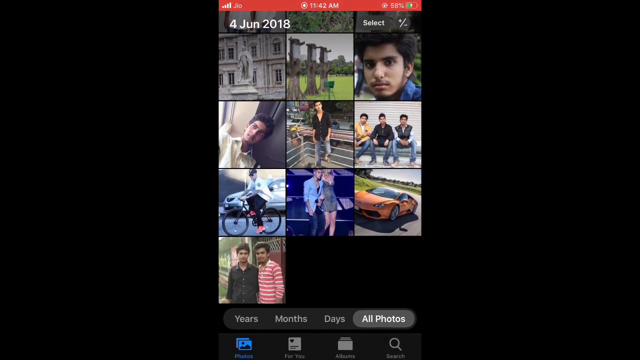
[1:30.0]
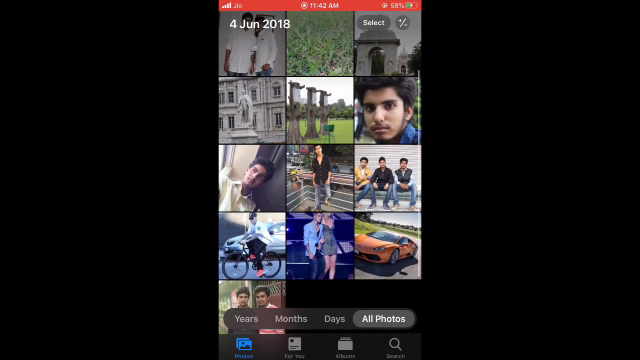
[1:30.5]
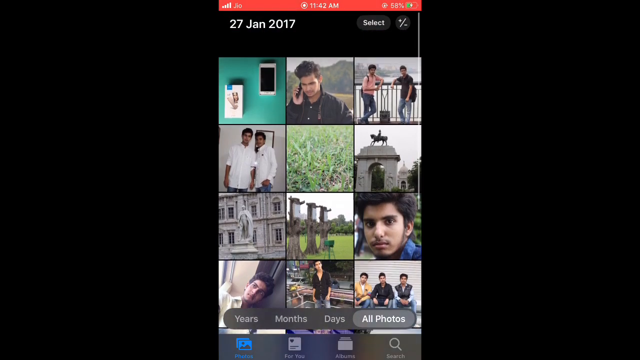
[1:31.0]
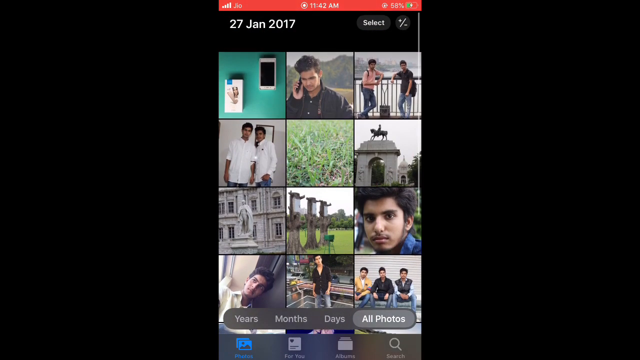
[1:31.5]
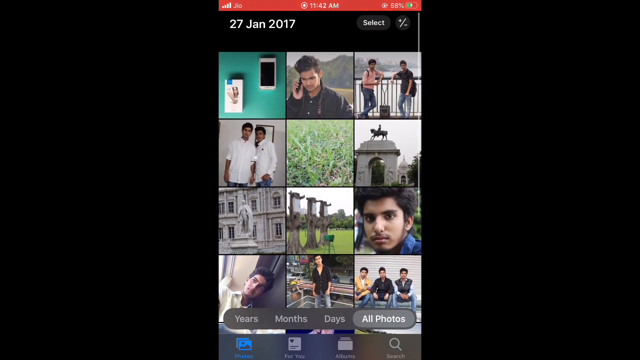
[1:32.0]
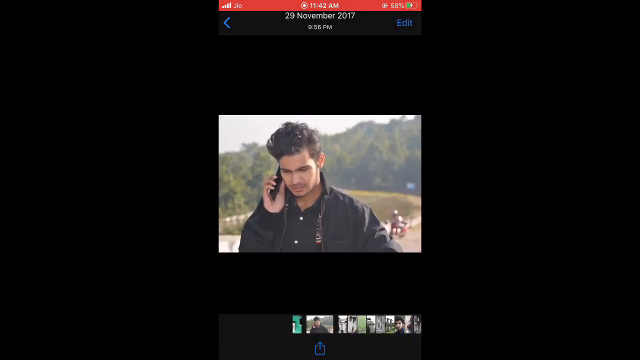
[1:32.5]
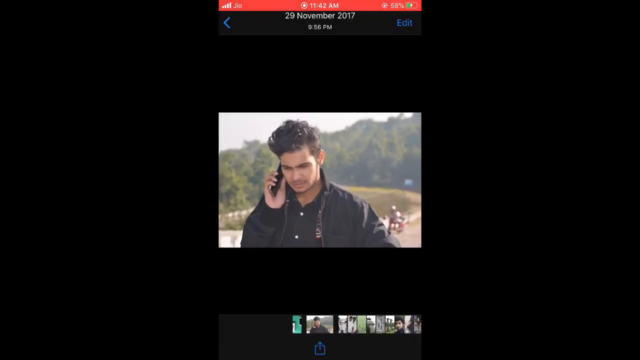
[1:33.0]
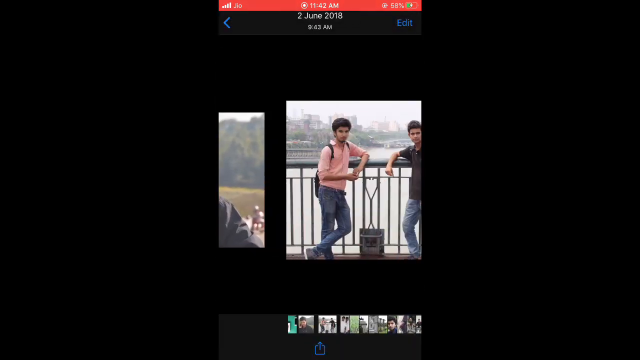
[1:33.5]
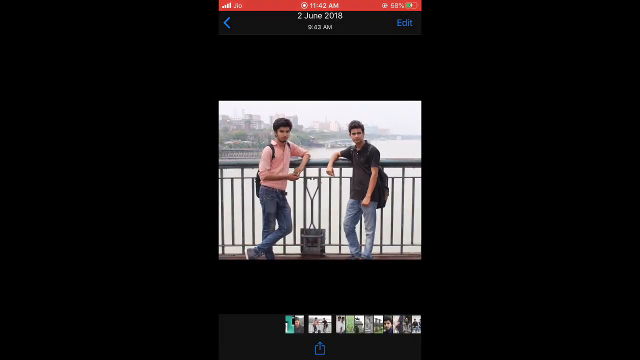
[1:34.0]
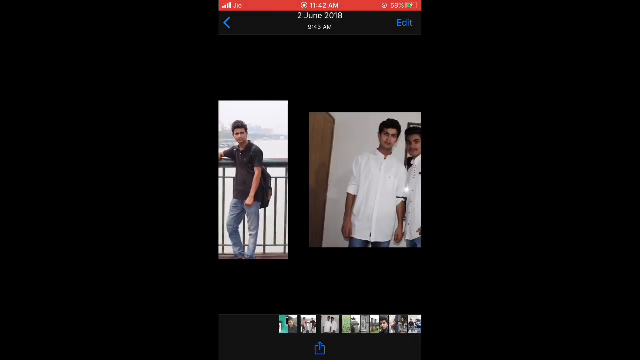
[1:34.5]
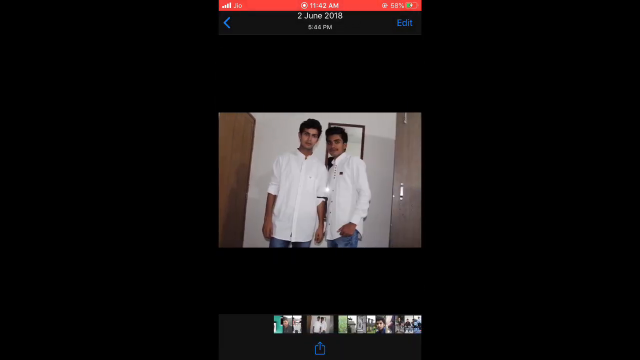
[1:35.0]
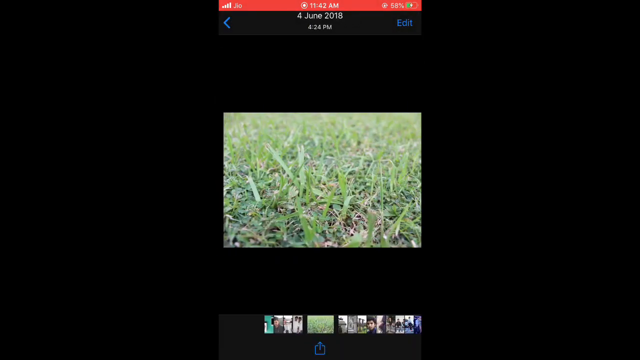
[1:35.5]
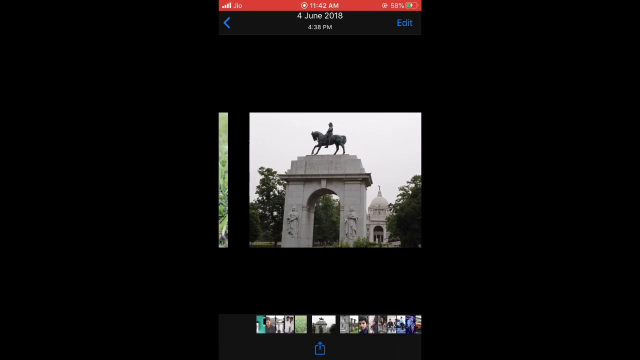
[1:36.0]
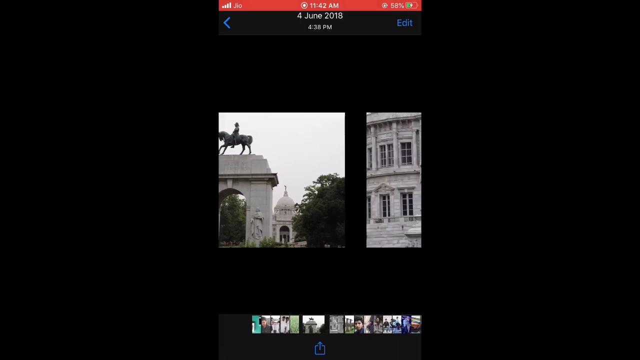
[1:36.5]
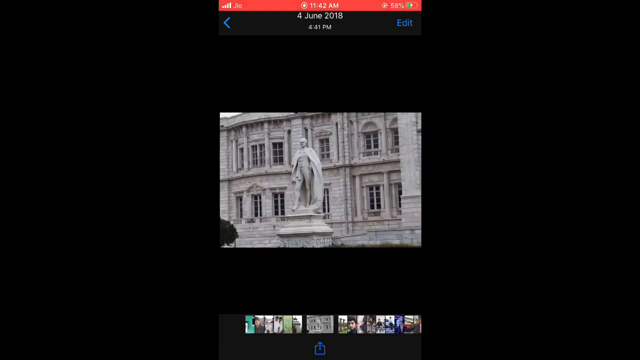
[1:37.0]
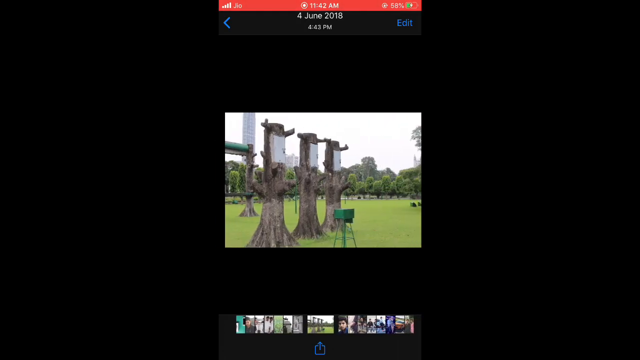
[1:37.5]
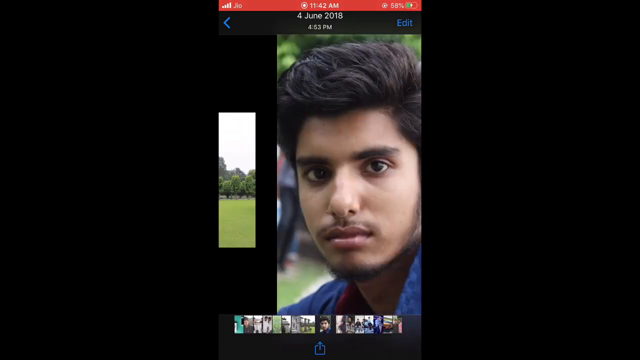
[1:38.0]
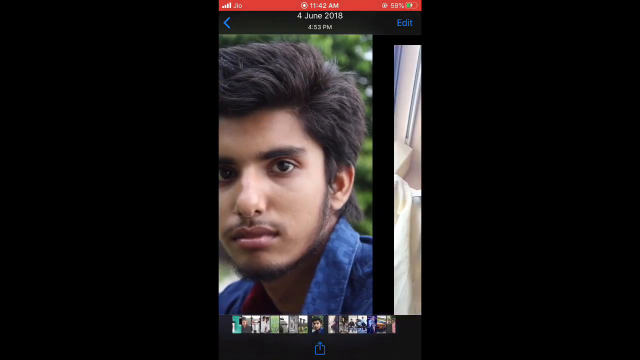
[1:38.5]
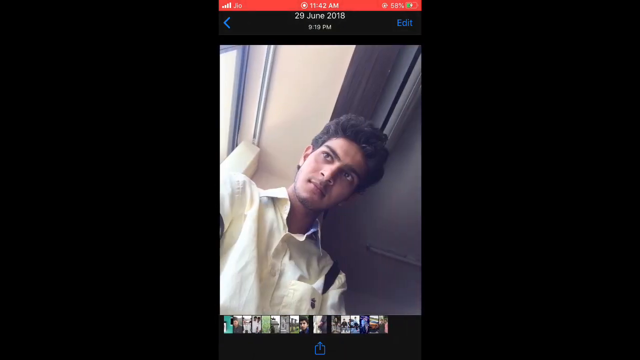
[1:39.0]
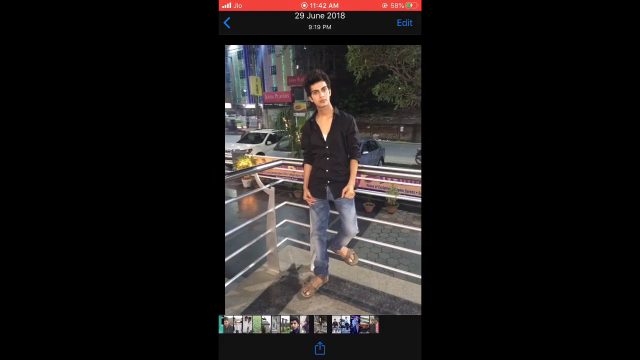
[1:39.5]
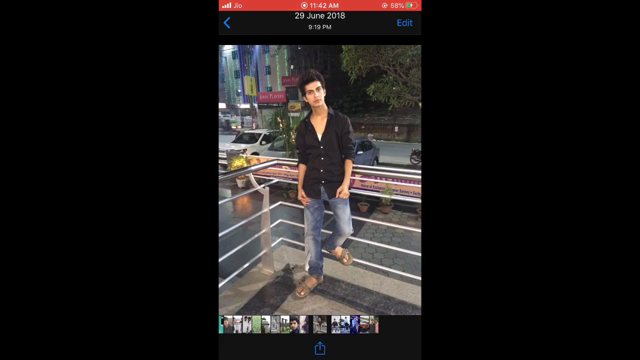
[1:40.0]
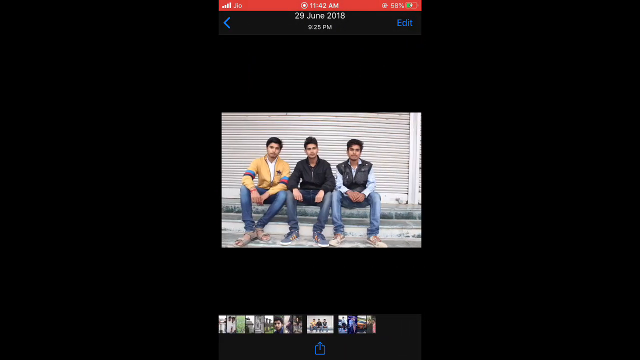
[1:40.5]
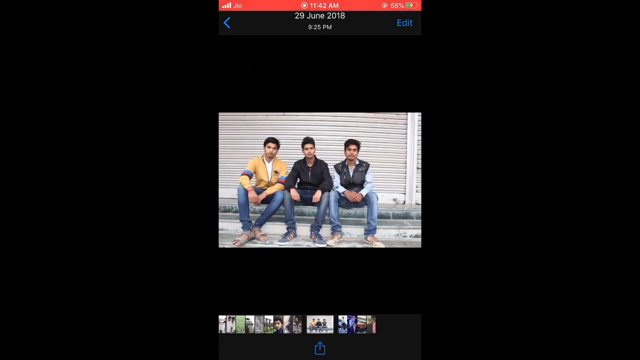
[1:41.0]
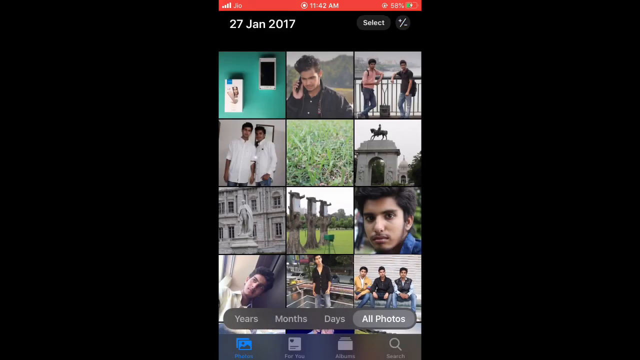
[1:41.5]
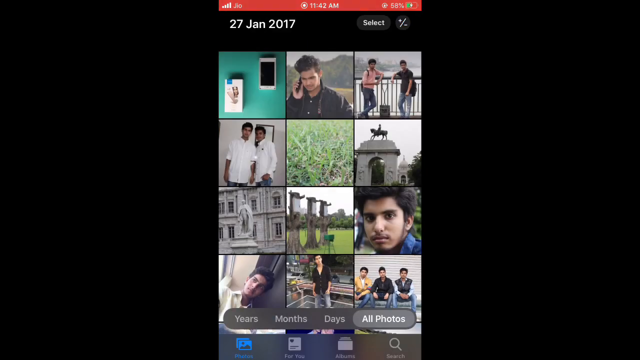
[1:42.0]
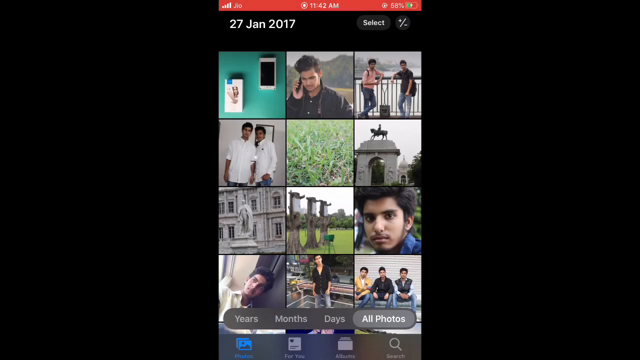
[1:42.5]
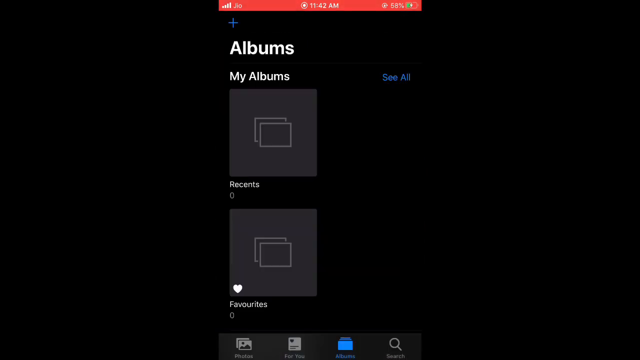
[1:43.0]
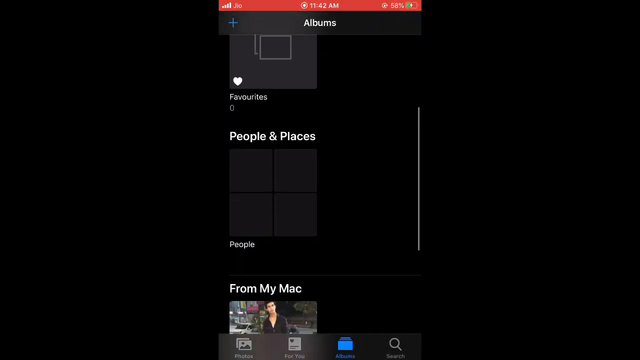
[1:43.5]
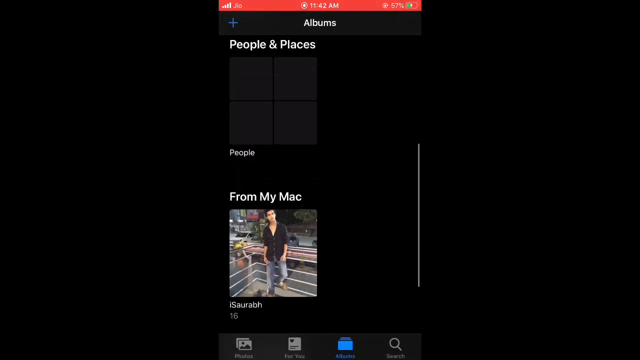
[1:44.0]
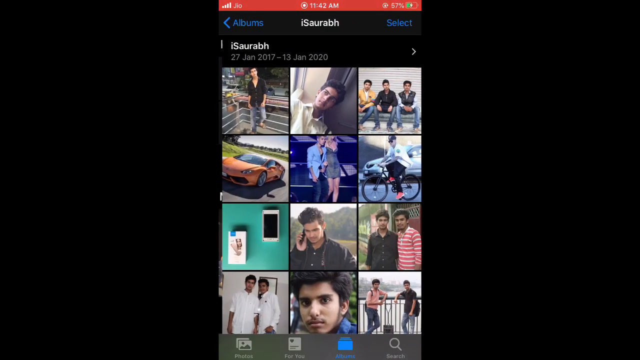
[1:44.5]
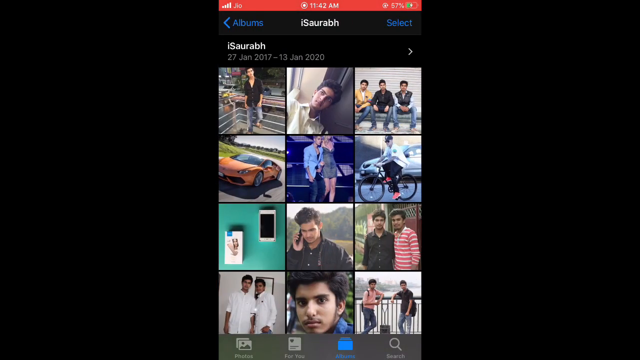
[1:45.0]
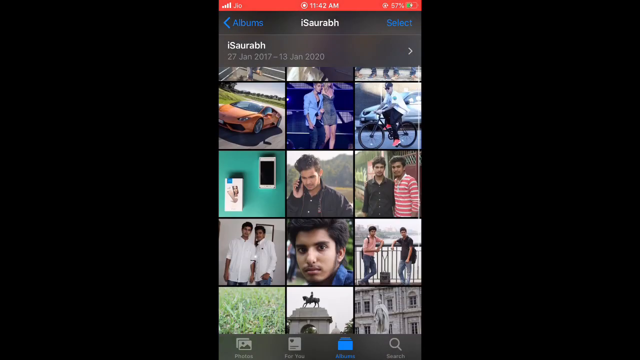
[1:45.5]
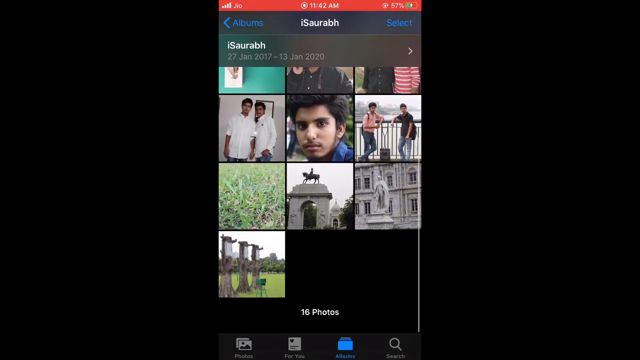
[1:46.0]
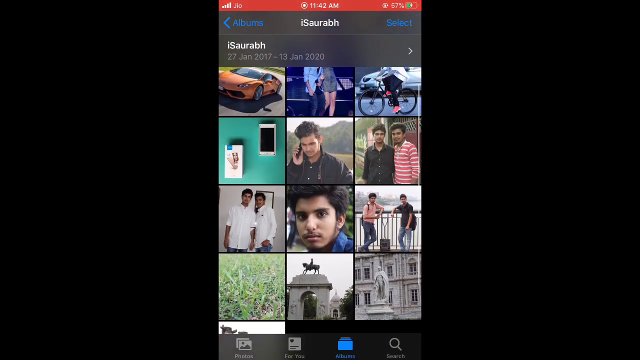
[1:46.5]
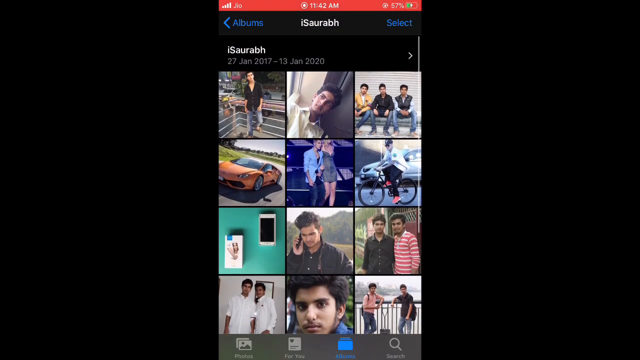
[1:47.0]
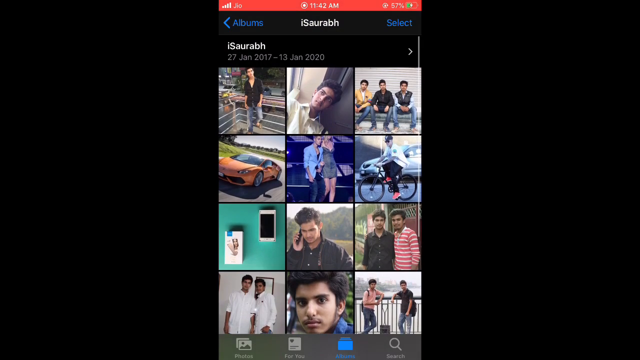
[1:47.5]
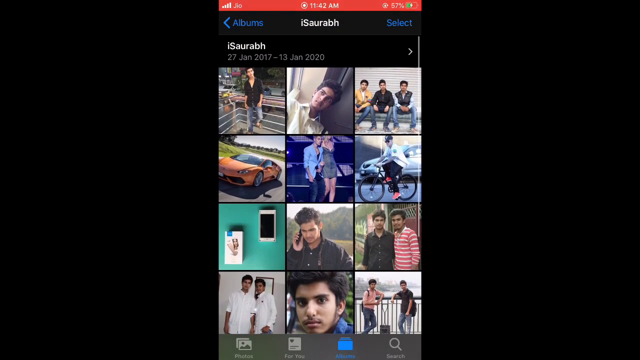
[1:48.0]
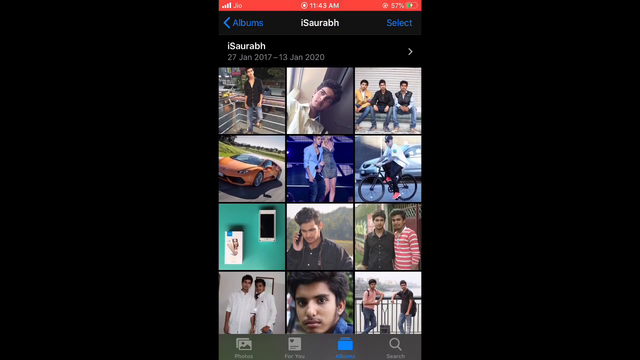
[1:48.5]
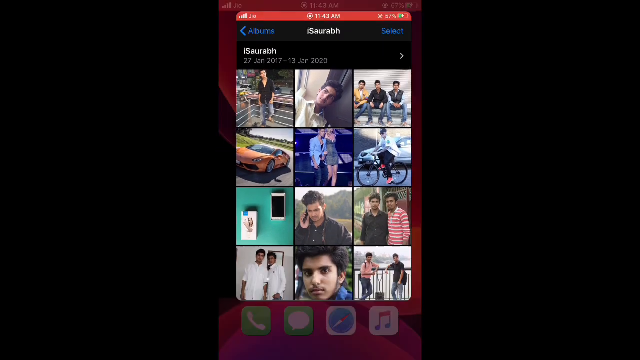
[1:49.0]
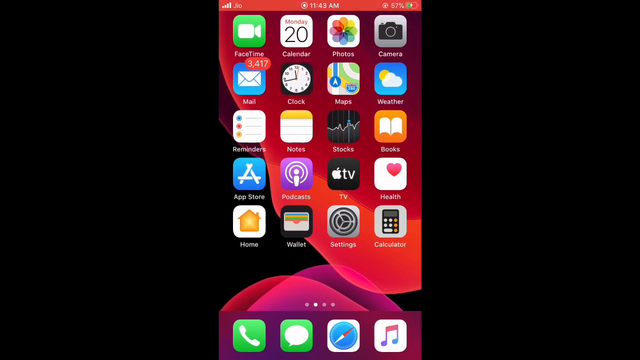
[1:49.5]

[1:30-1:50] An image of the cell phone screen shows the photos just synced from the computer. The user scrolls through the thumbnails, then clicks on them and scrolls through the photos individually, one by one. Next they go to some kind of albums area on the phone, inside the photos icon. An album appears to have been created dated June 4th, 2018, and when they back out to the other screen there are multiple albums.